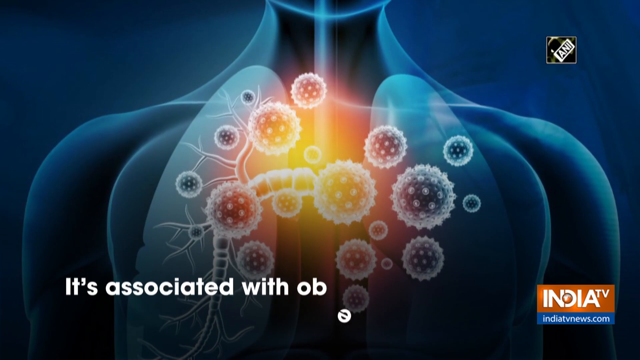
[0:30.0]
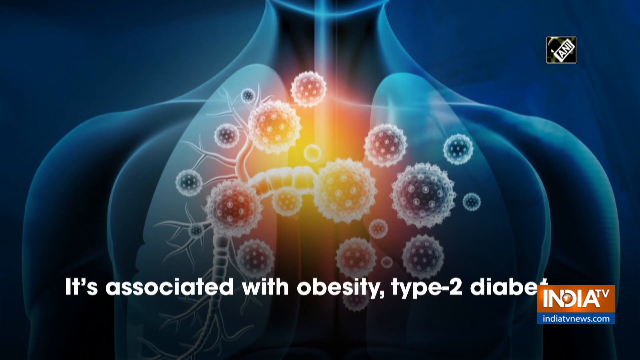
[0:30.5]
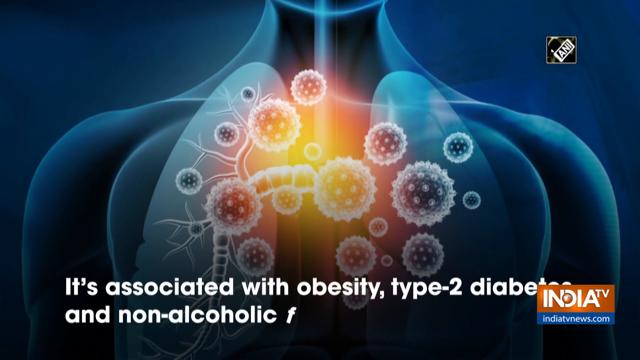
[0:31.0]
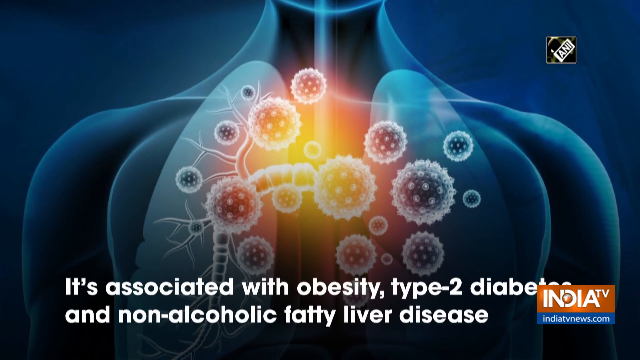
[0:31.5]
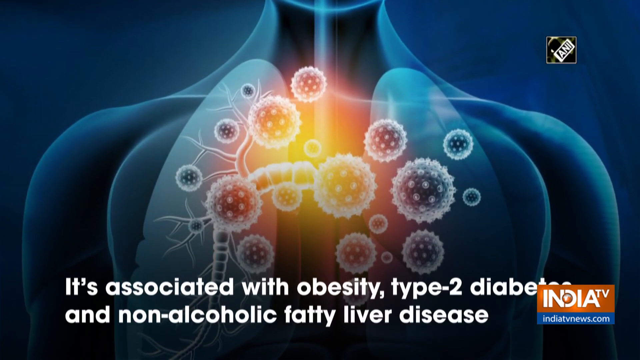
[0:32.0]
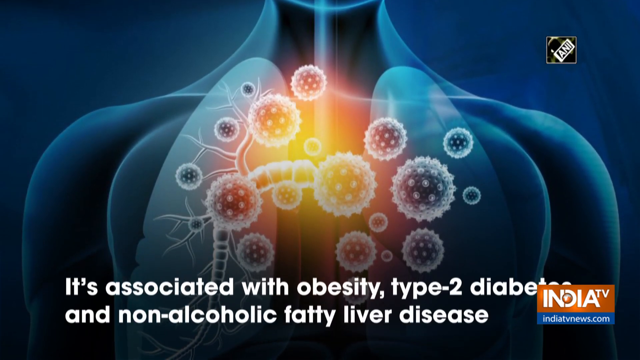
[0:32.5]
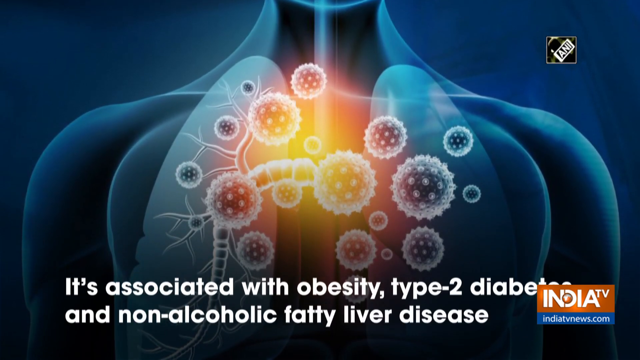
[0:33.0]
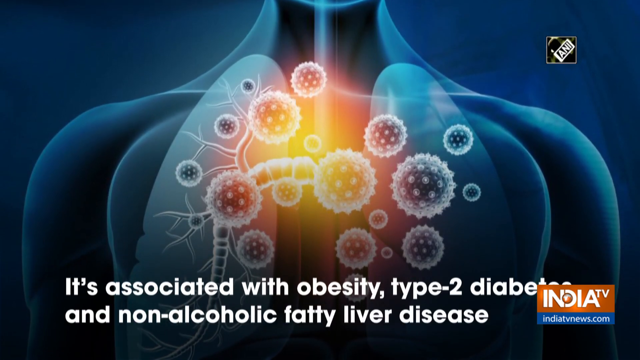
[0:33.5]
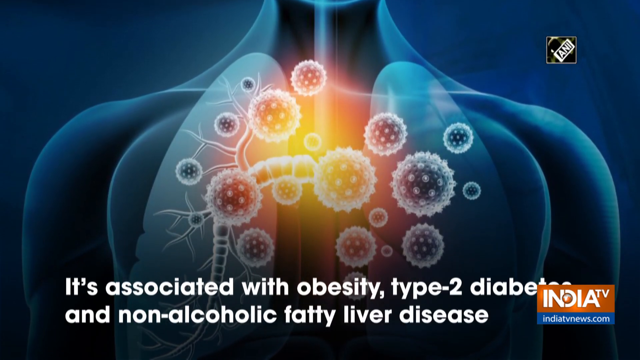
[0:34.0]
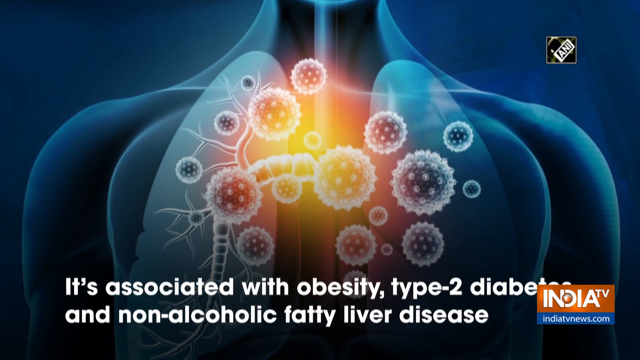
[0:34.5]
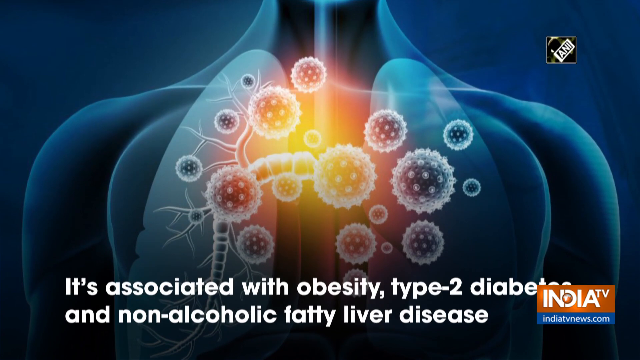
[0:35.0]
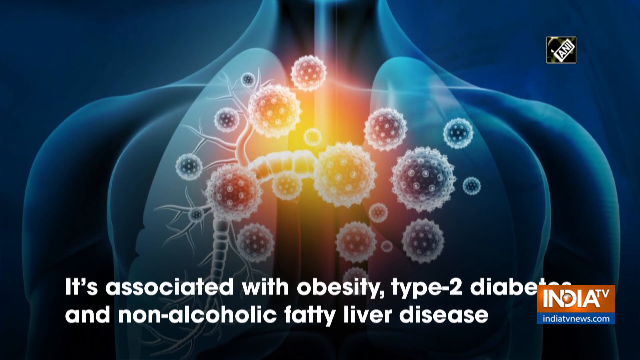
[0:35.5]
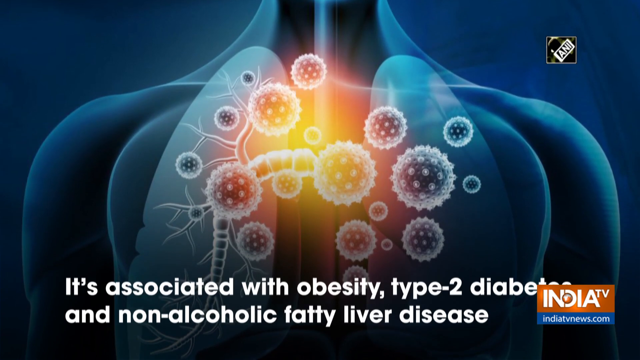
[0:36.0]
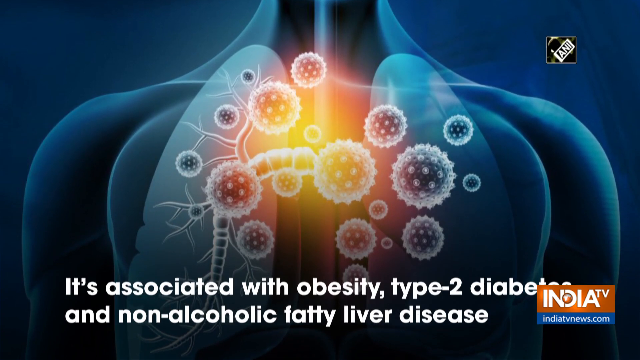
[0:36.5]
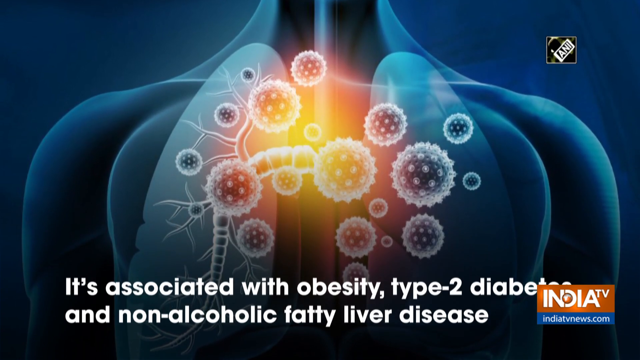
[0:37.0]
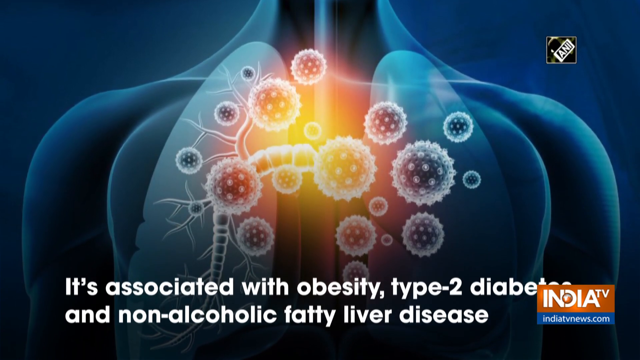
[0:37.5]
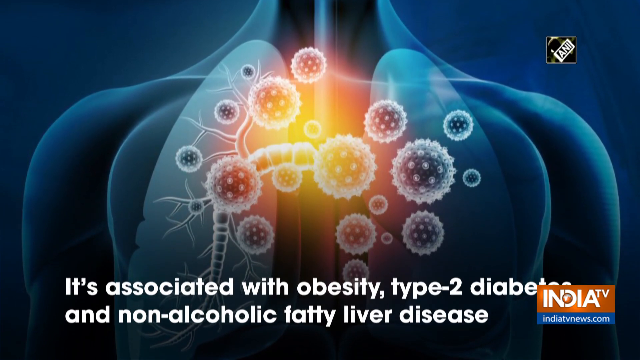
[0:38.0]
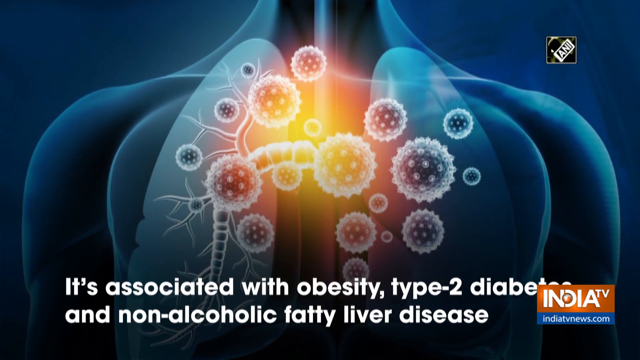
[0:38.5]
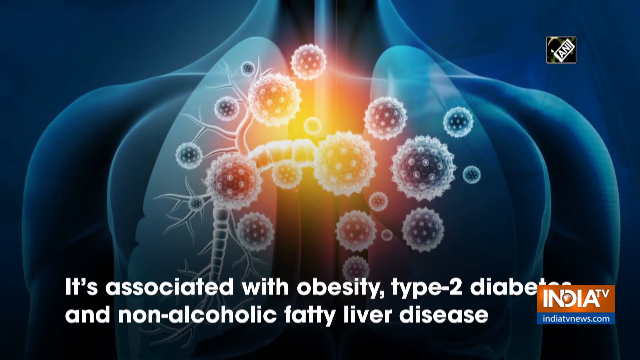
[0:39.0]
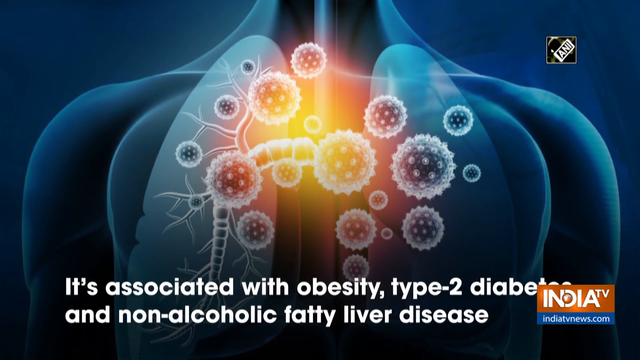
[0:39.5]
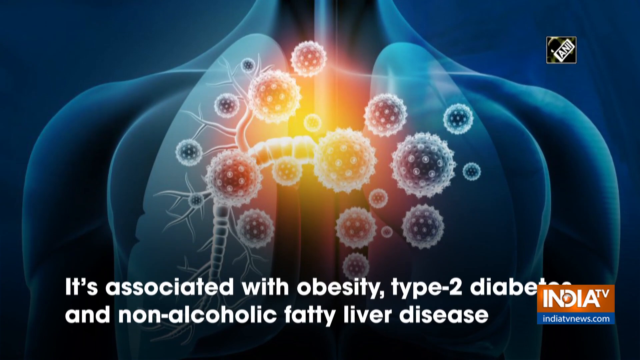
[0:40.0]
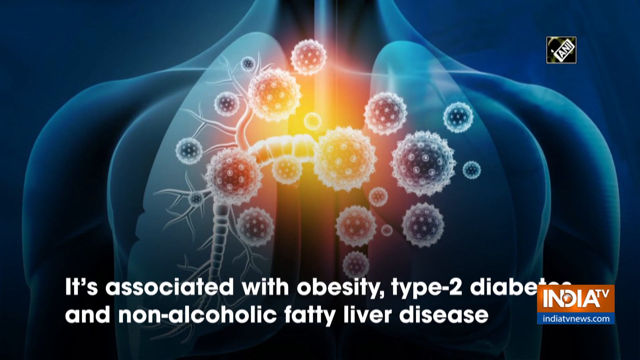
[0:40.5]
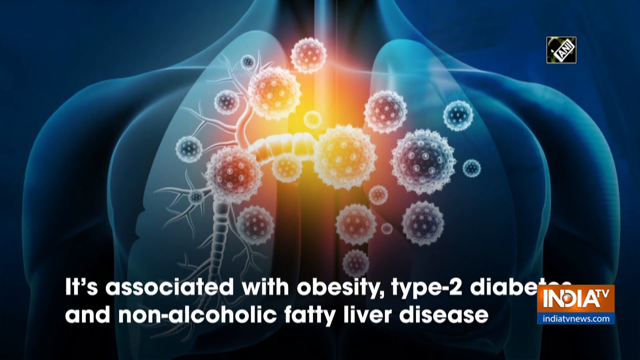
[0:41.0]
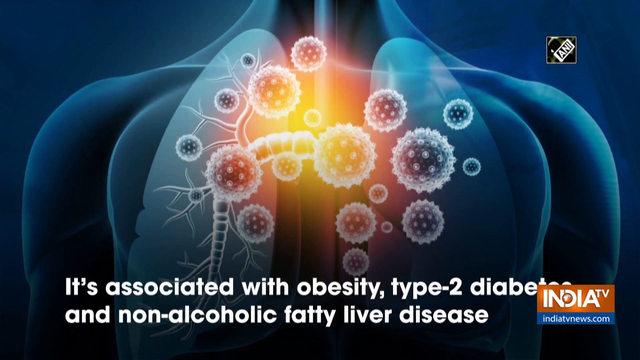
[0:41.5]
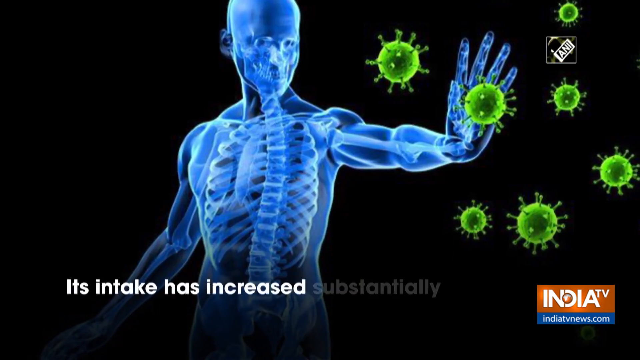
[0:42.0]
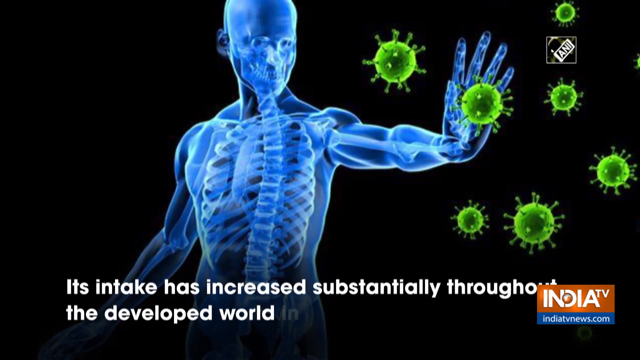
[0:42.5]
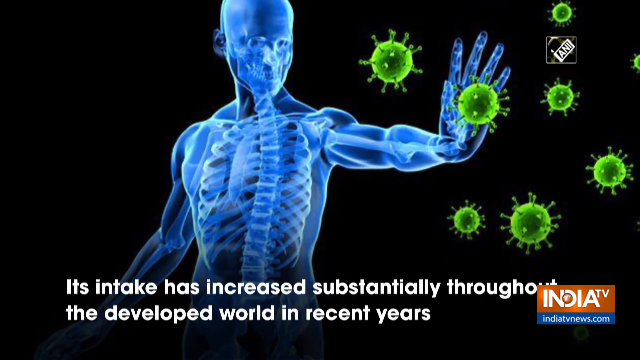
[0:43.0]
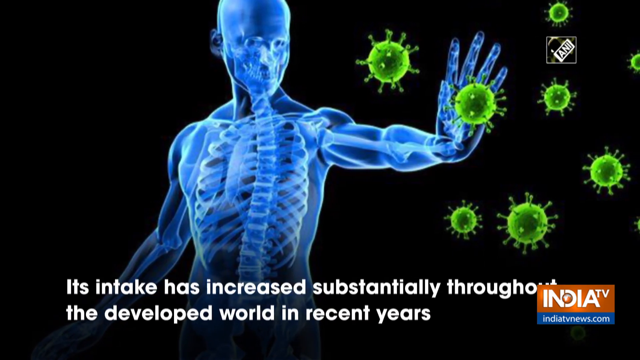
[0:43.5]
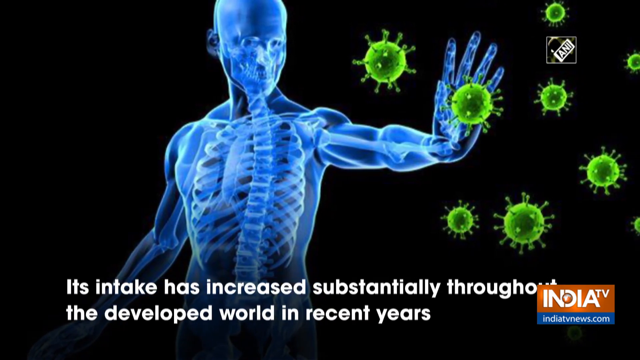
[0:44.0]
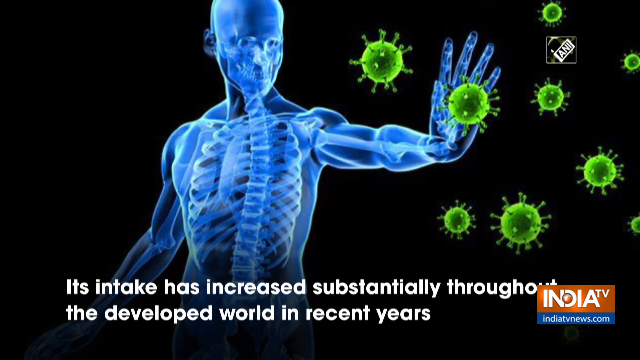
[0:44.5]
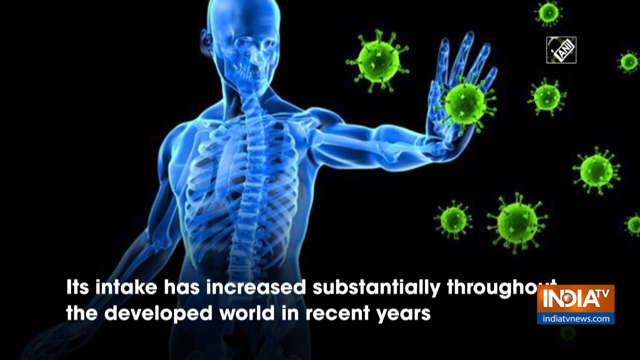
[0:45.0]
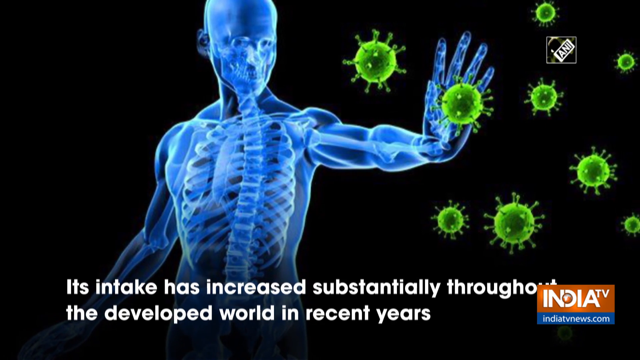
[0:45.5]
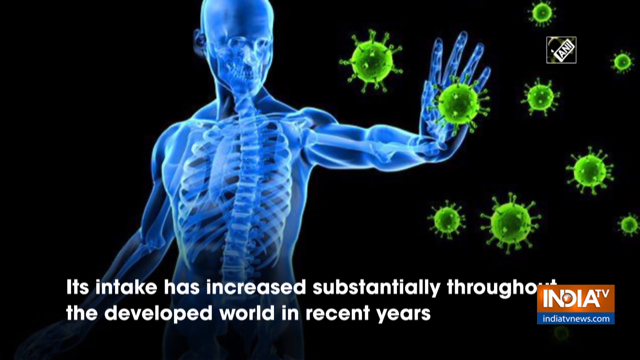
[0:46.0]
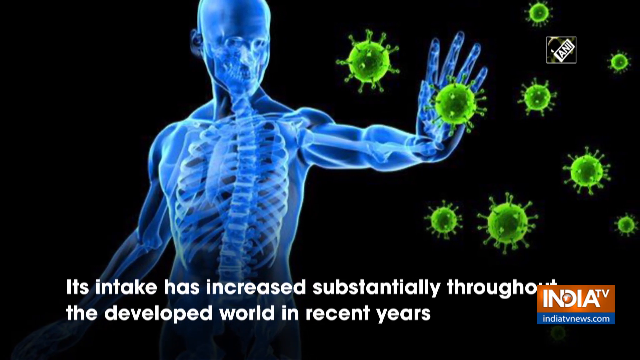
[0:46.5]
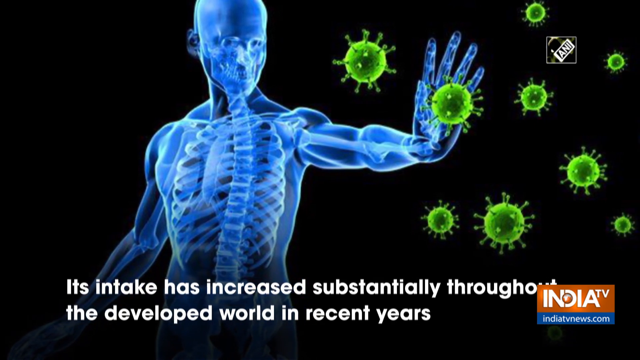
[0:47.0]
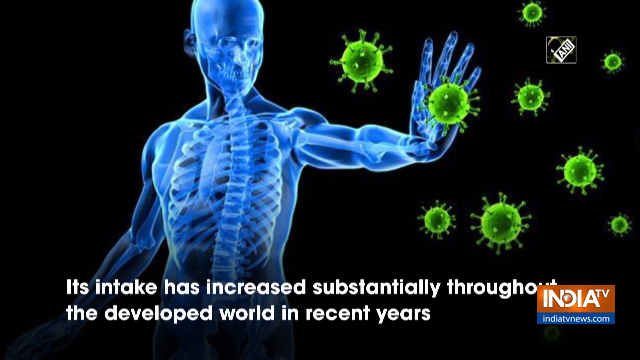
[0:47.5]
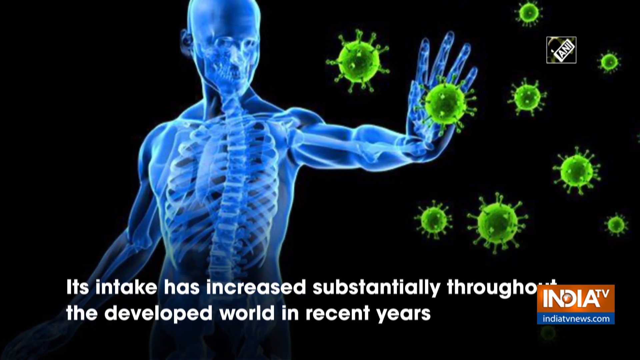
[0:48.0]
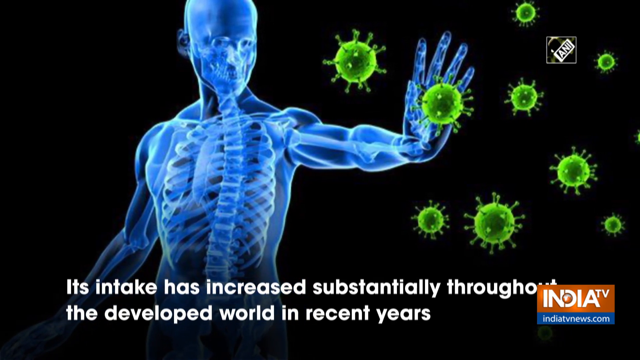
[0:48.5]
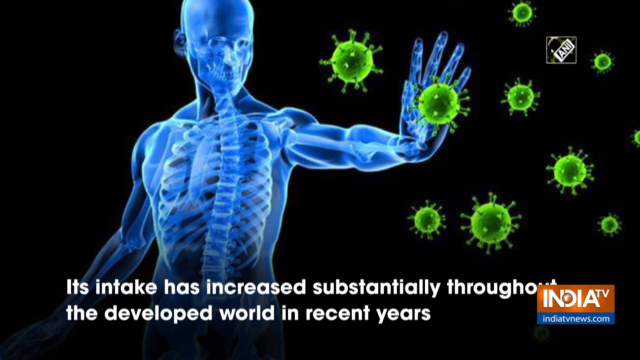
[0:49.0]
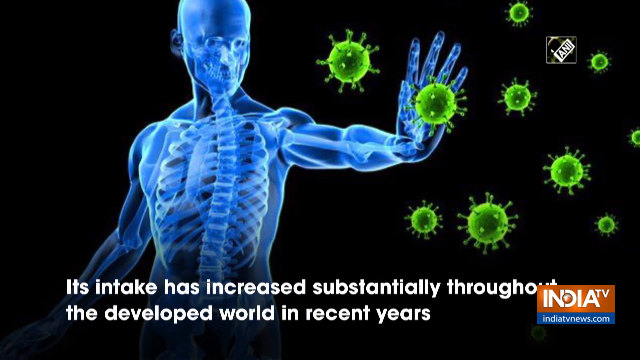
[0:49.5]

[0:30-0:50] A computer-generated image of the human body is displayed in very vibrant colors ranging from yellow and pink to red and purple. Text at the bottom of the screen reads "it's associated with obesity type 2 diabetes and non-alcoholic fatty liver disease." In the lower right-hand corner, the TV channel's logo reads "India TV" in white letters against a red backdrop. After several seconds, the camera flashes away to a different screen with a black background. In the middle of it is an illuminated blue humanoid-type figure whose insides are apparently visible. He has his left arm stretched out and appears to be touching what appear to be large green microbes. Words at the bottom of the screen read "its intake has increased substantially throughout the developed world in recent years."